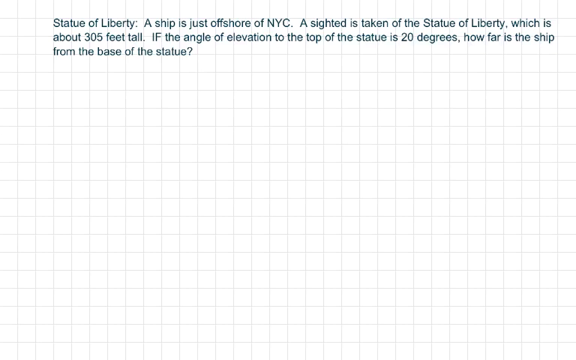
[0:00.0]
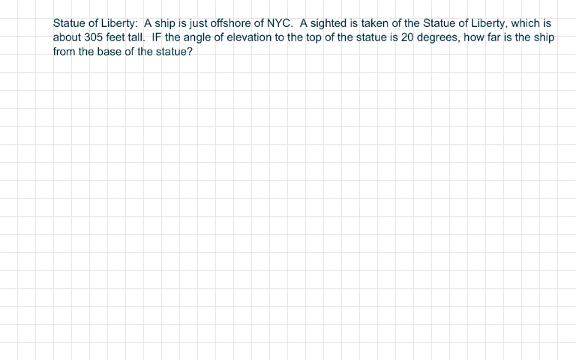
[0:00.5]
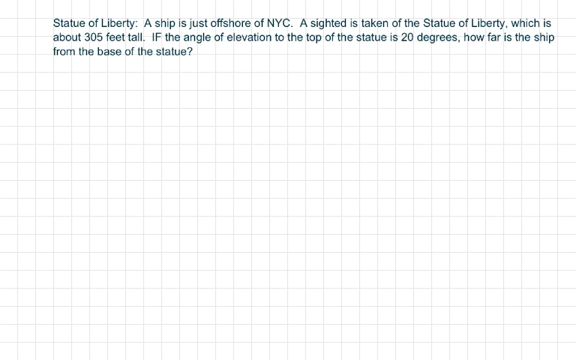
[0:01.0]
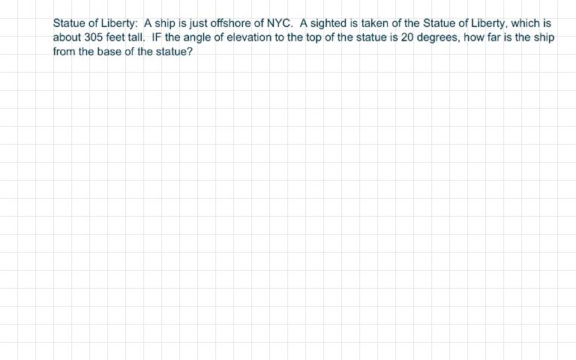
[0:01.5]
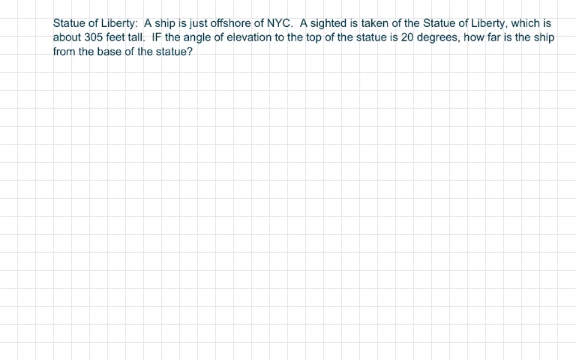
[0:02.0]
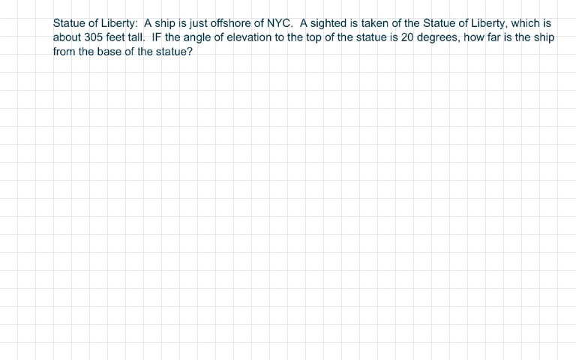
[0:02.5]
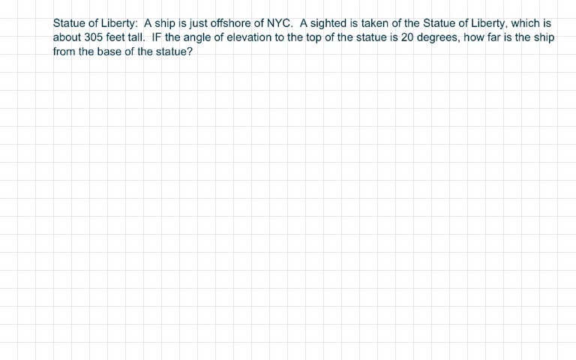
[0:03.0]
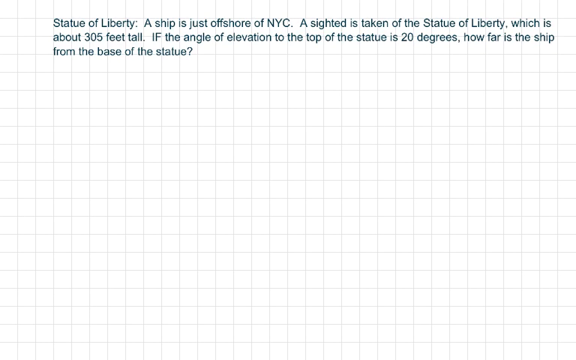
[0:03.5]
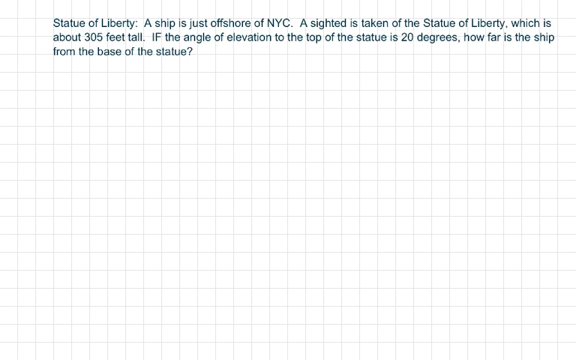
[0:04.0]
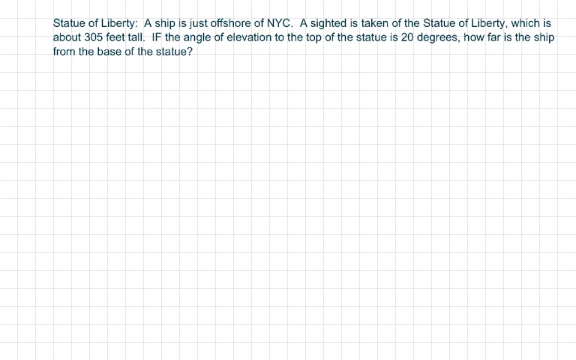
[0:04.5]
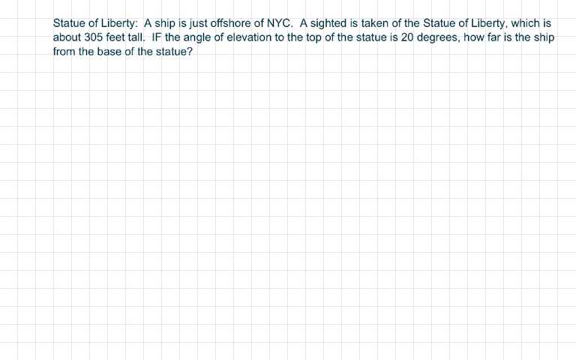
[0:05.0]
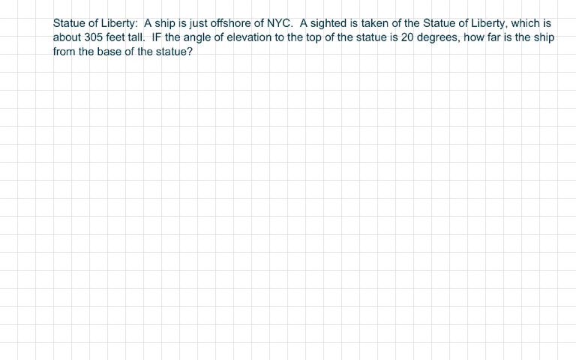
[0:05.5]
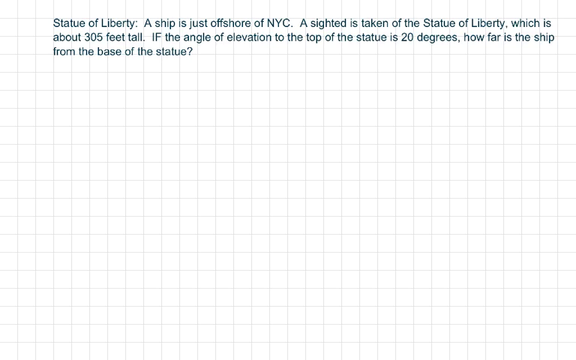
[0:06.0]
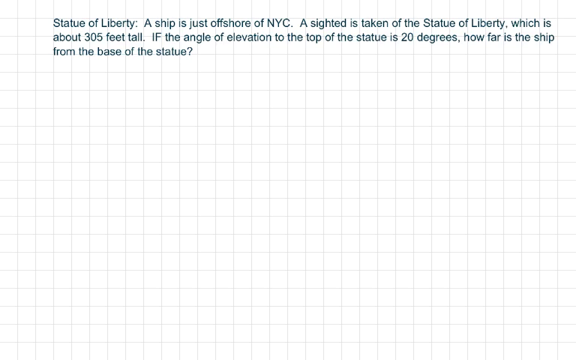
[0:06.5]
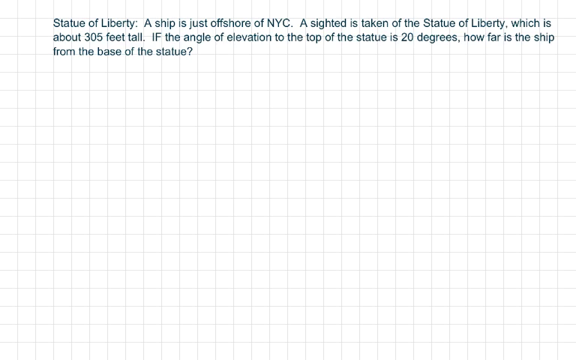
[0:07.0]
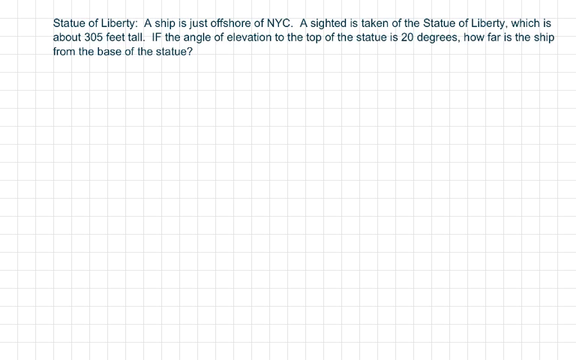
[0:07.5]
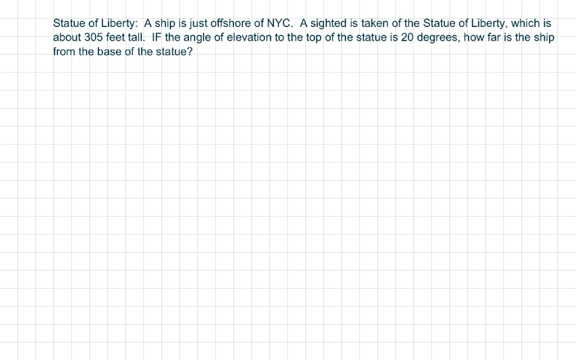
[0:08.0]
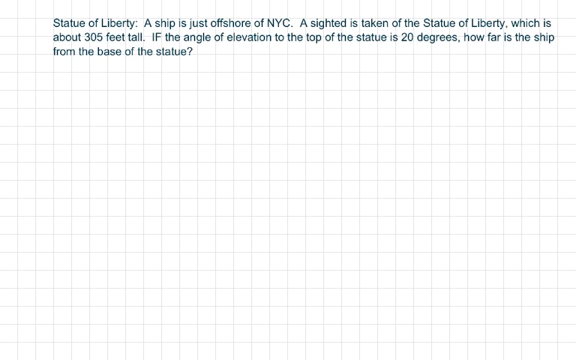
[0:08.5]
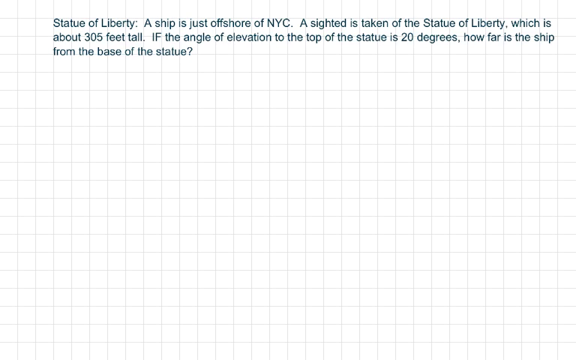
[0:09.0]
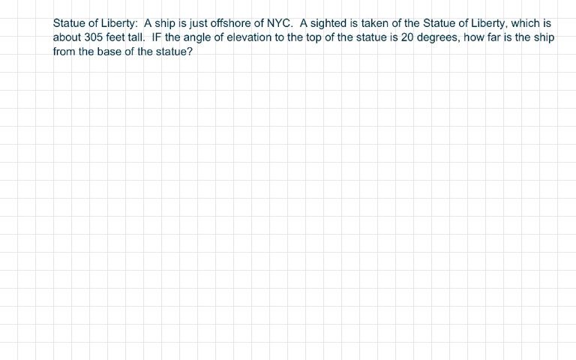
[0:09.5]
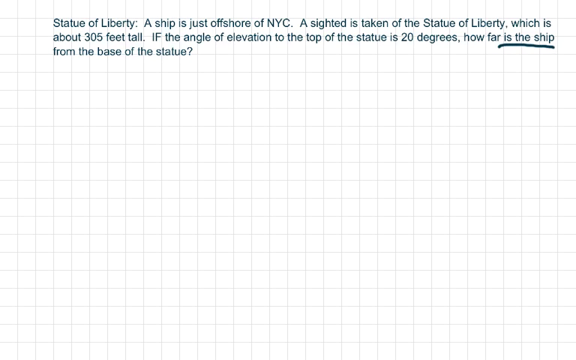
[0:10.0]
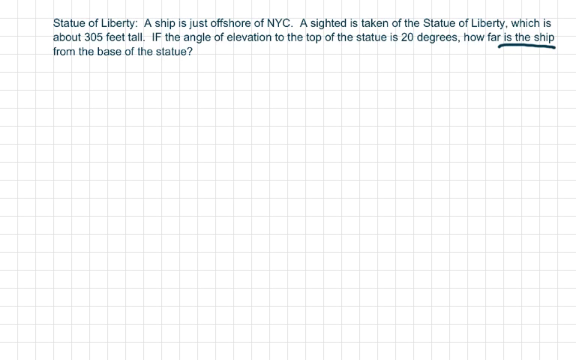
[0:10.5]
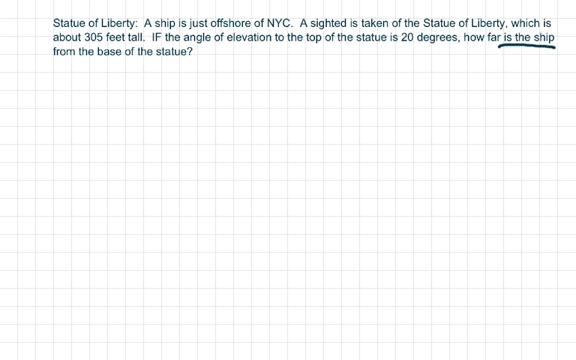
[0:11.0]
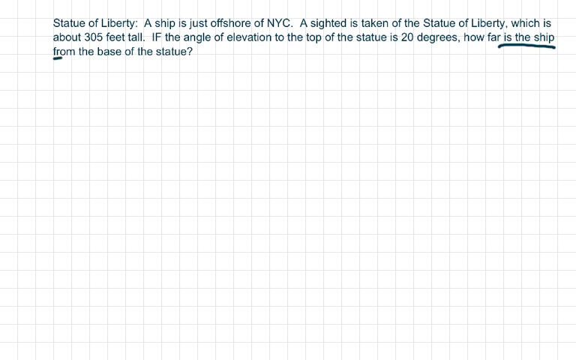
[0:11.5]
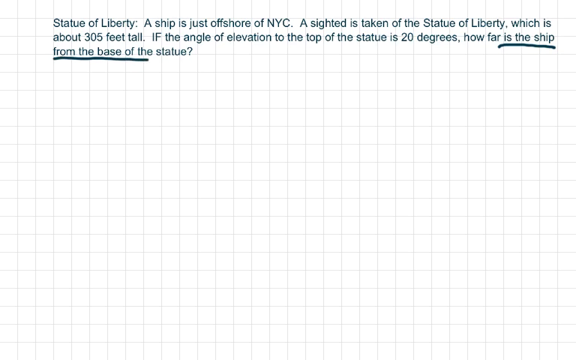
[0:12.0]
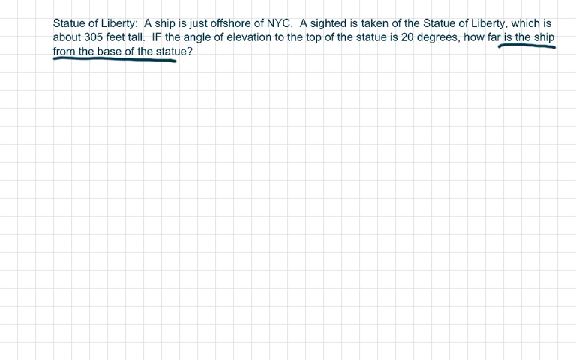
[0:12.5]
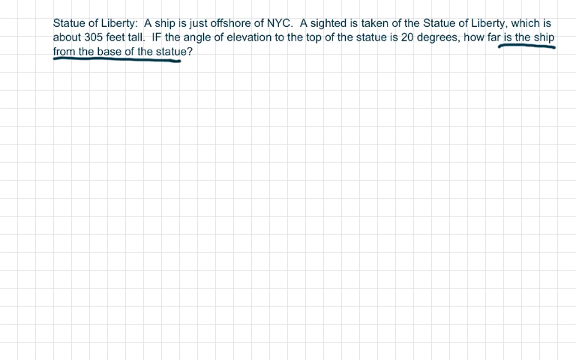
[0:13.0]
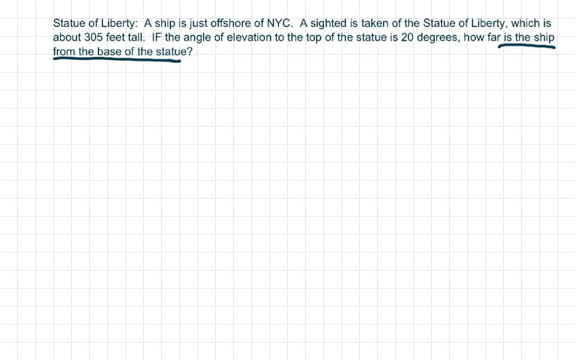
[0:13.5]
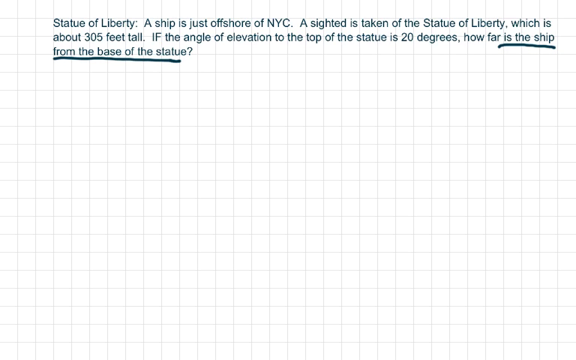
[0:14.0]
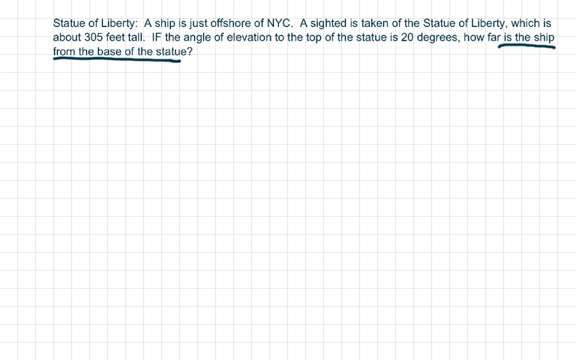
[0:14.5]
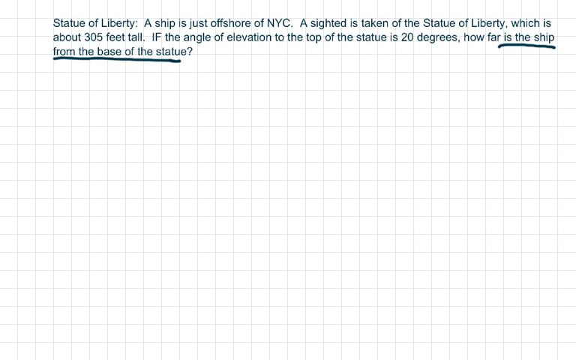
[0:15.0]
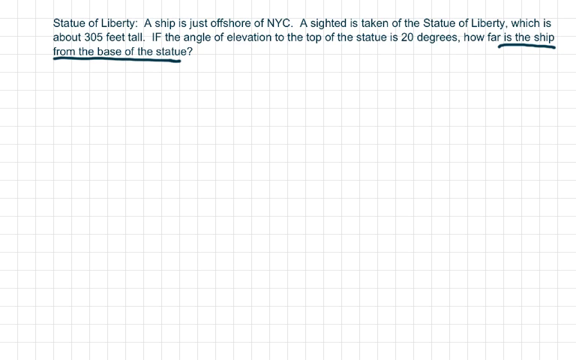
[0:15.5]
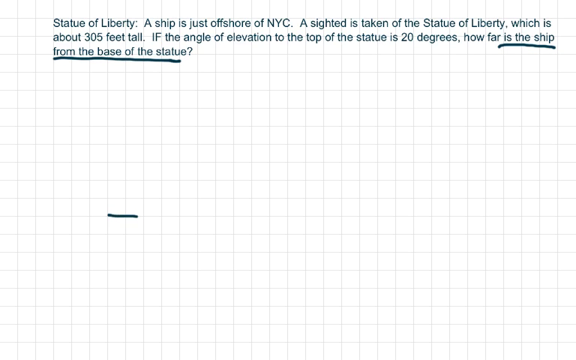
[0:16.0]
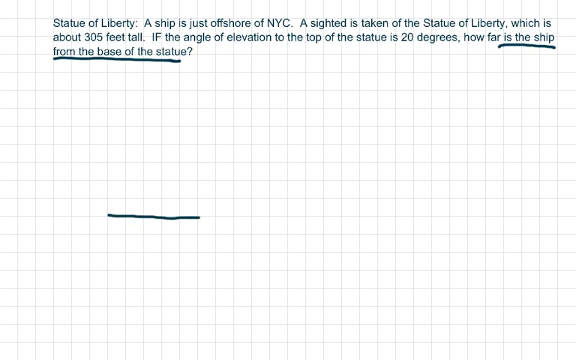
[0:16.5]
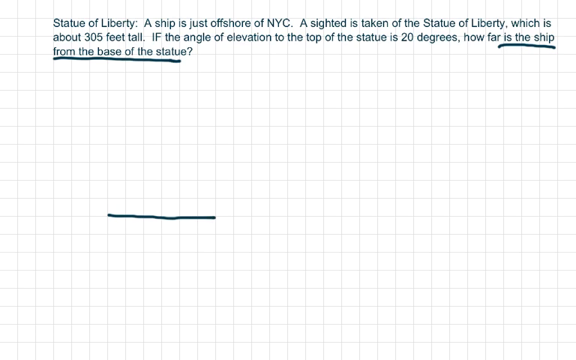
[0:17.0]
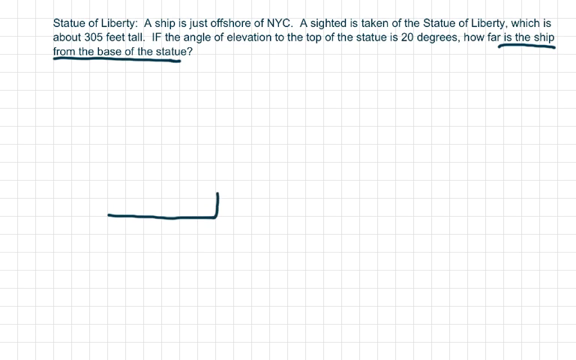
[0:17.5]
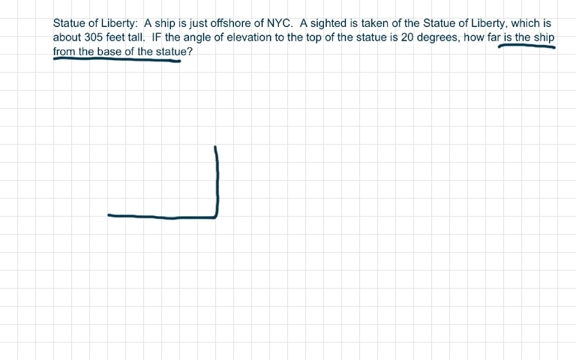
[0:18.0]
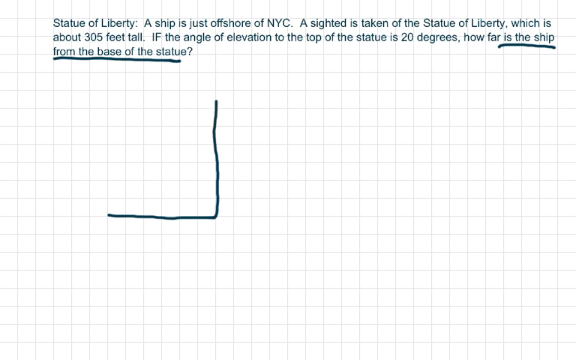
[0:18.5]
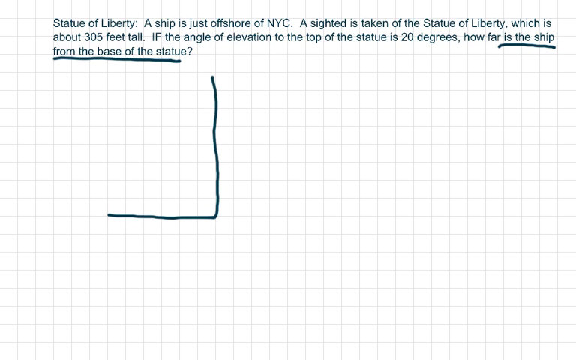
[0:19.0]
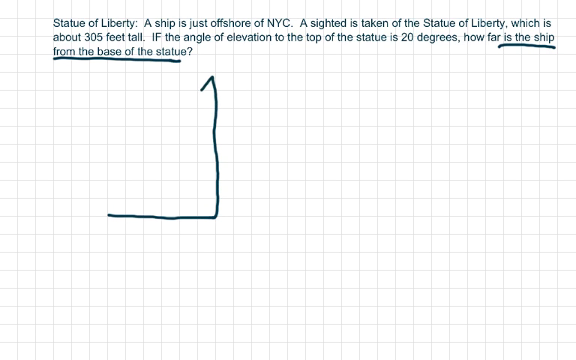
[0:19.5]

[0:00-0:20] The video begins on a white background with thin gray lines that look like graphing paper. At the top, in dark green letters, the text reads "Statue of Liberty: A ship is just offshore of NYC. A sighted is taken of the Statue of Liberty, which is about 305 feet tall. If the angle of elevation to the top of the statue is 20 degrees, how far is the ship from the base of the statue?" The words "is the ship from the base of the statue" at the end of the word problem are underlined with a dark green line. Then, in the middle of the page, slightly skewed to the left, a triangle is drawn. Its bottom right corner is a 90 degree angle, while the other bottom corner and the top angle are smaller acute angles.